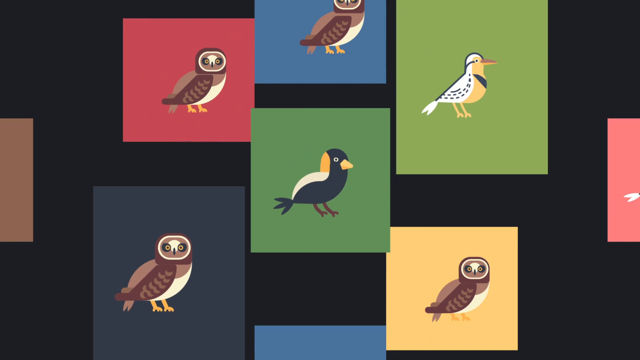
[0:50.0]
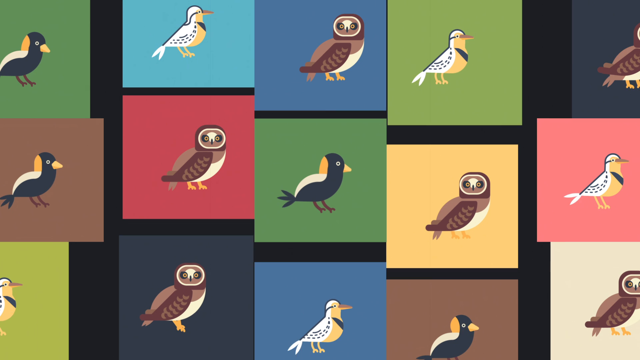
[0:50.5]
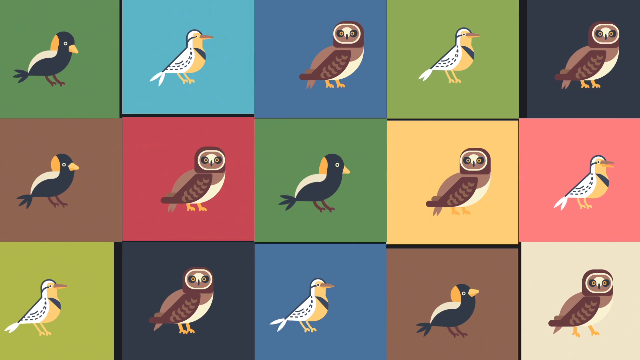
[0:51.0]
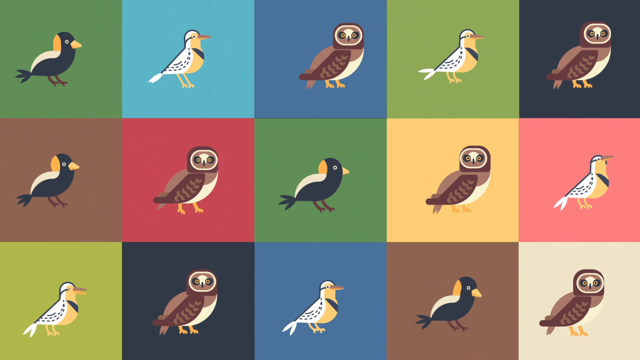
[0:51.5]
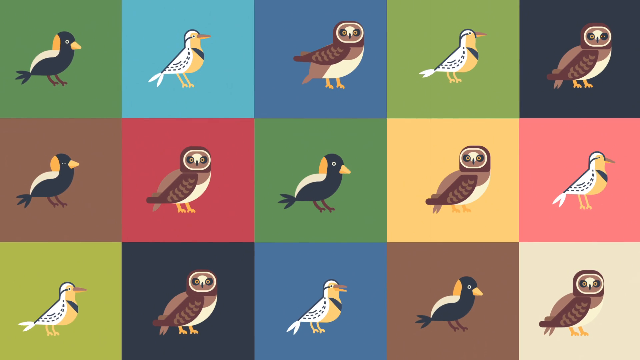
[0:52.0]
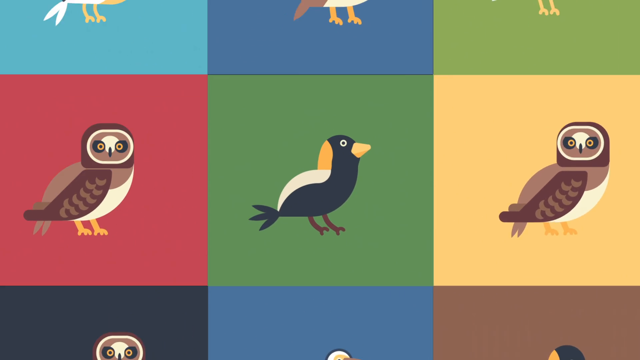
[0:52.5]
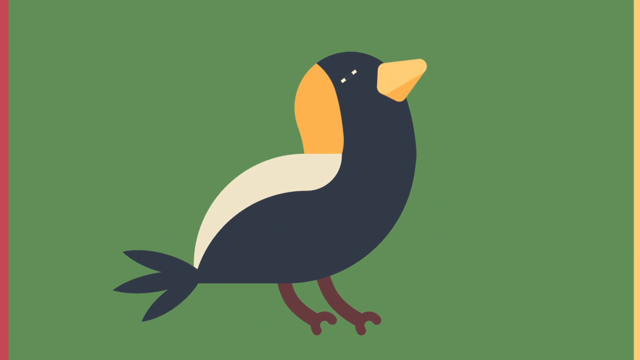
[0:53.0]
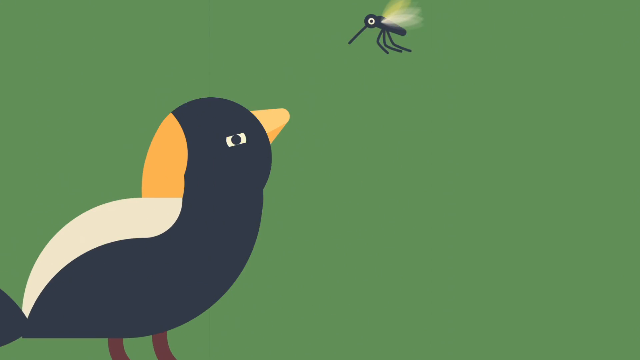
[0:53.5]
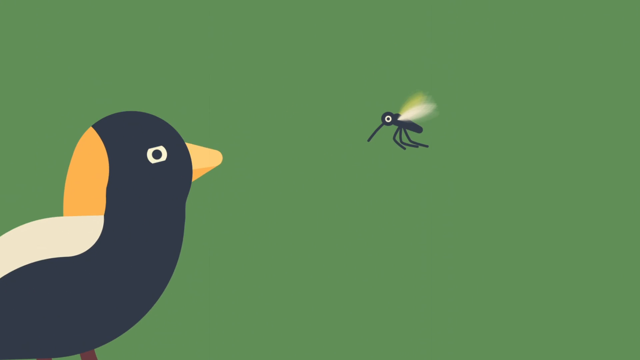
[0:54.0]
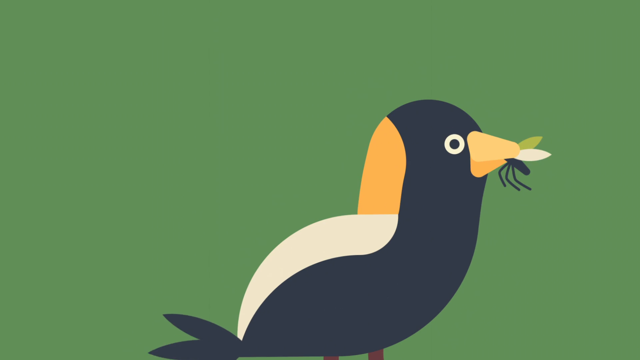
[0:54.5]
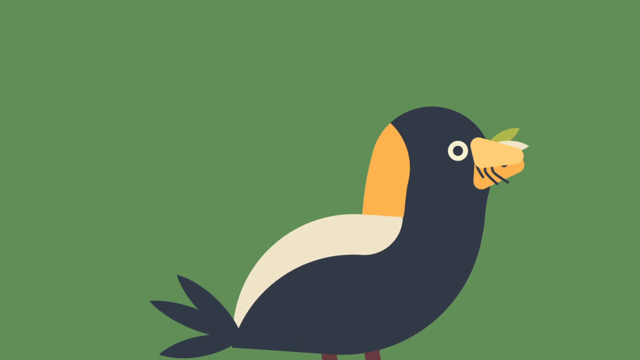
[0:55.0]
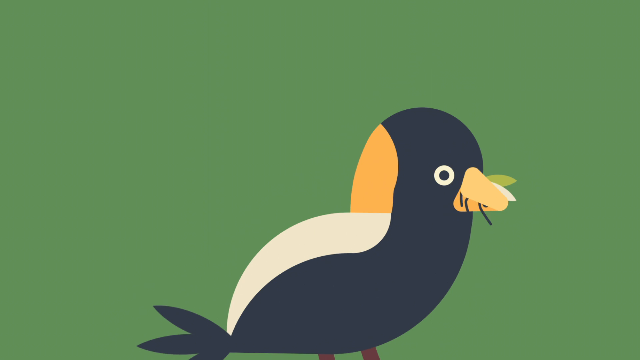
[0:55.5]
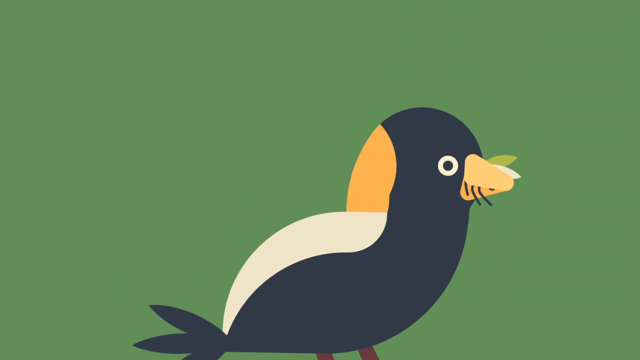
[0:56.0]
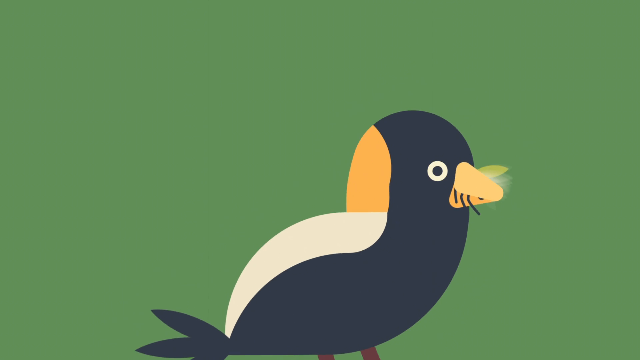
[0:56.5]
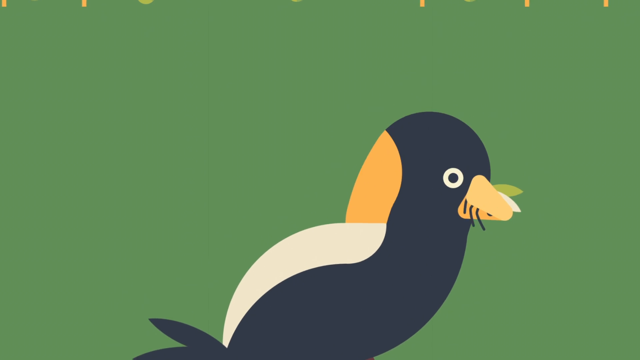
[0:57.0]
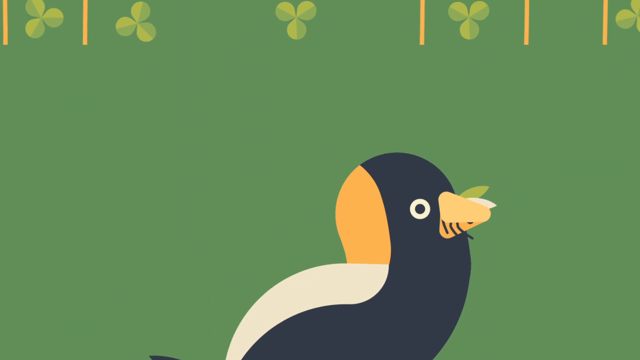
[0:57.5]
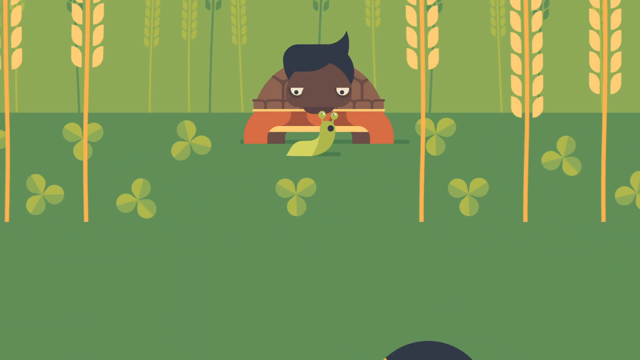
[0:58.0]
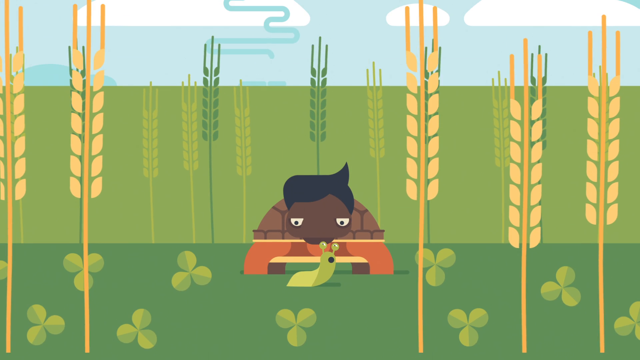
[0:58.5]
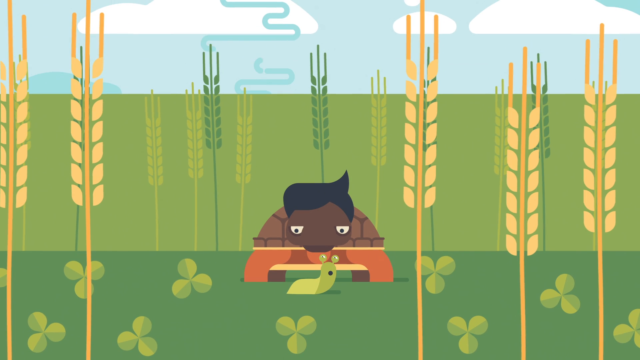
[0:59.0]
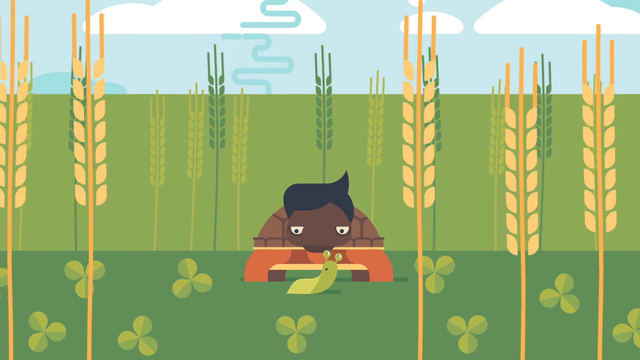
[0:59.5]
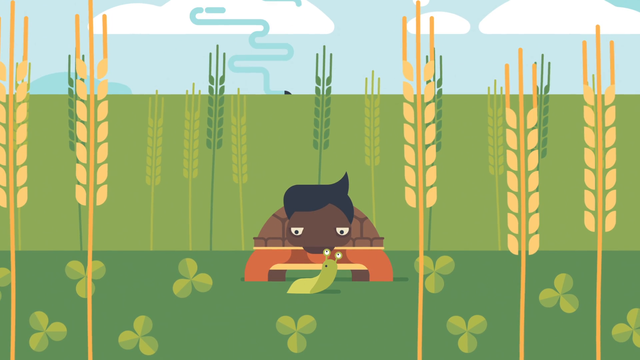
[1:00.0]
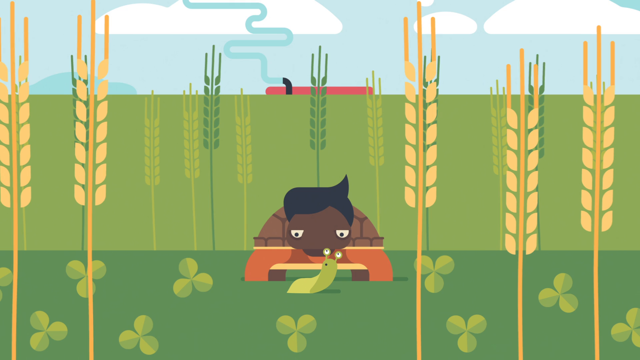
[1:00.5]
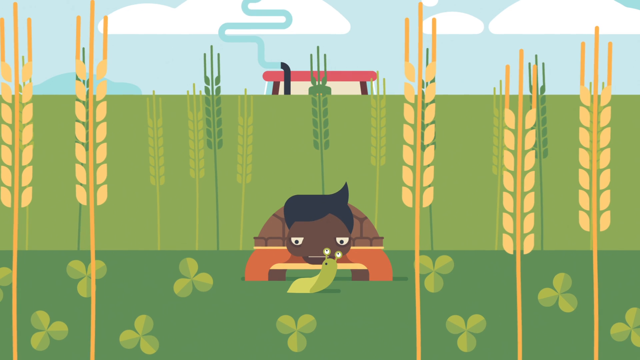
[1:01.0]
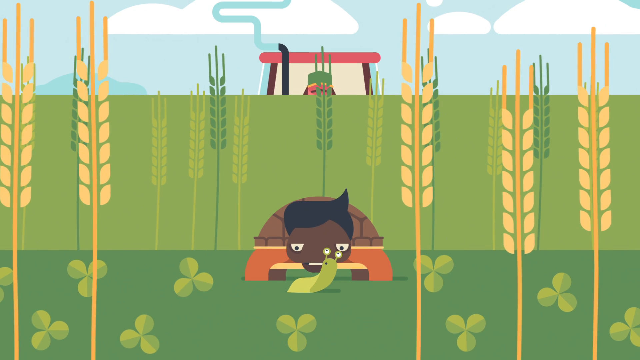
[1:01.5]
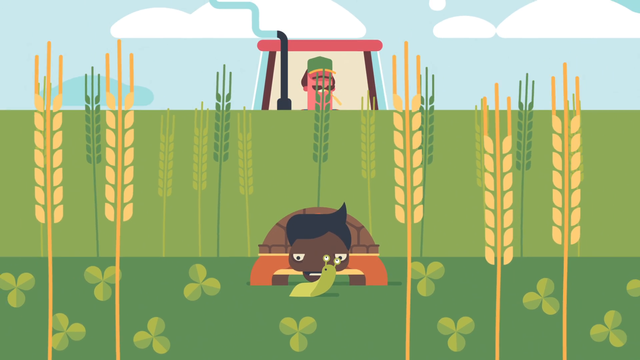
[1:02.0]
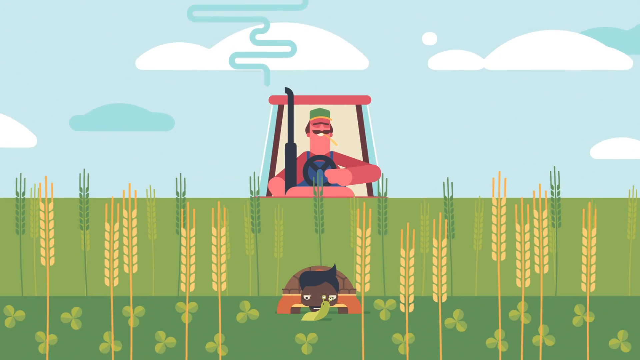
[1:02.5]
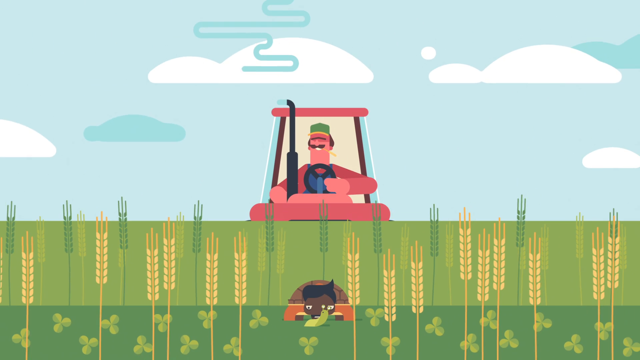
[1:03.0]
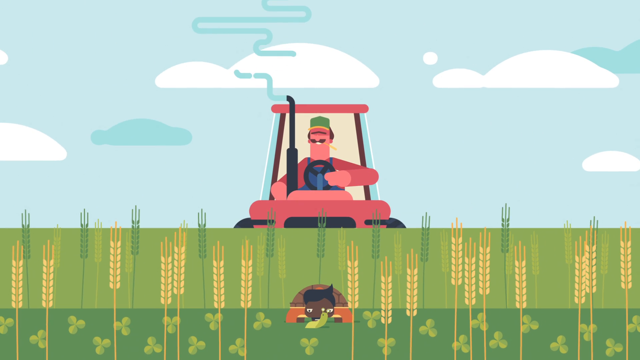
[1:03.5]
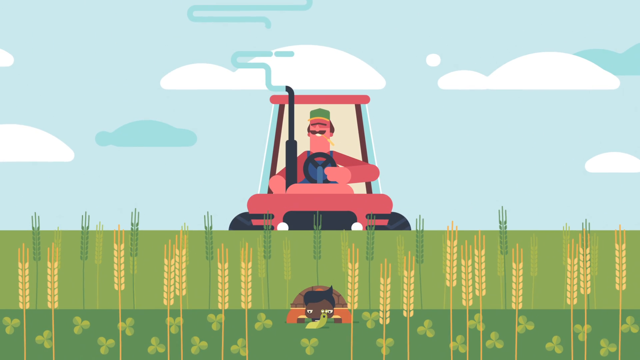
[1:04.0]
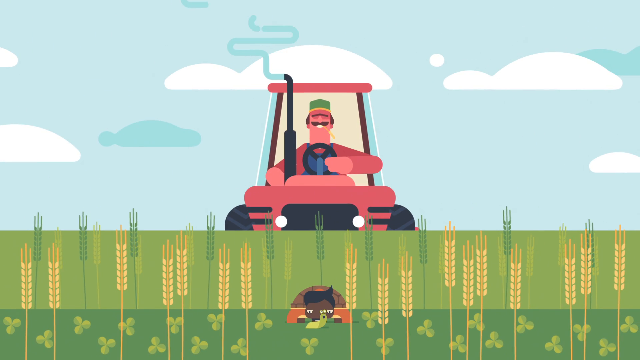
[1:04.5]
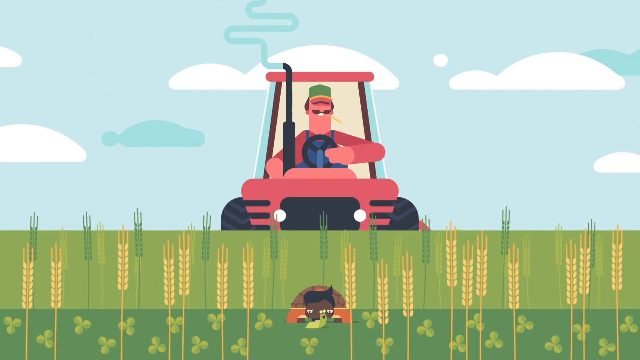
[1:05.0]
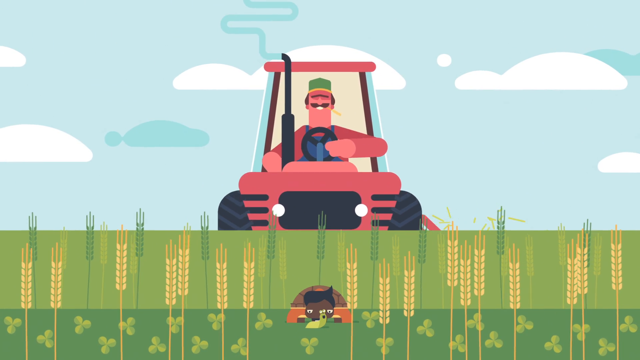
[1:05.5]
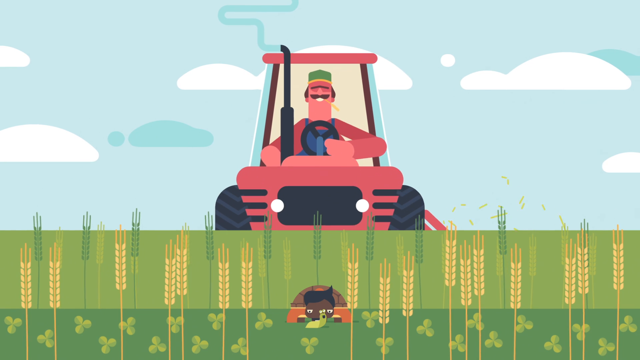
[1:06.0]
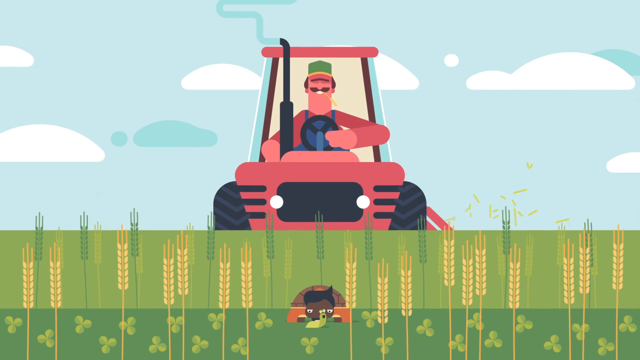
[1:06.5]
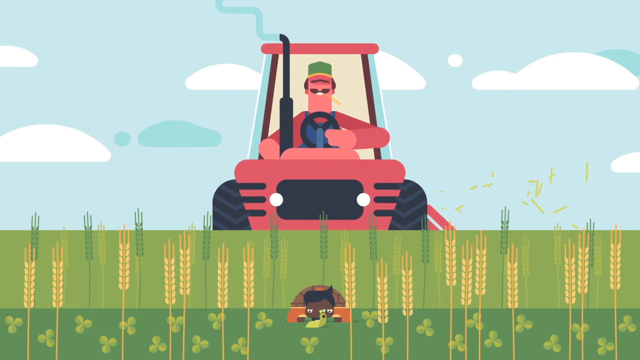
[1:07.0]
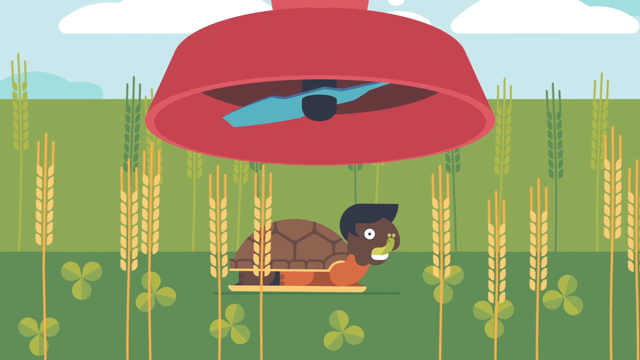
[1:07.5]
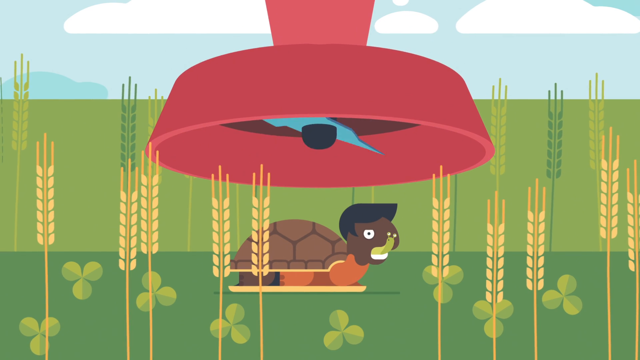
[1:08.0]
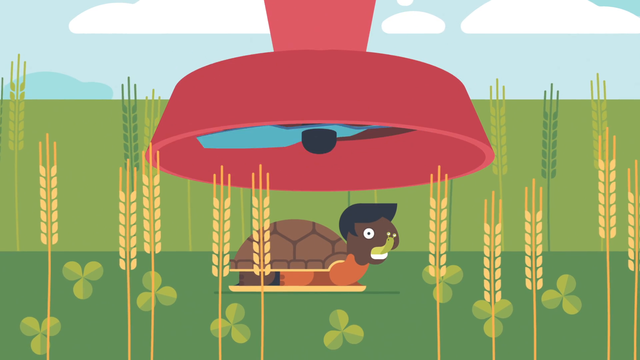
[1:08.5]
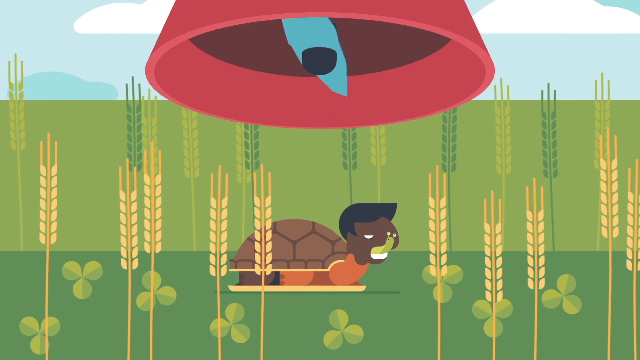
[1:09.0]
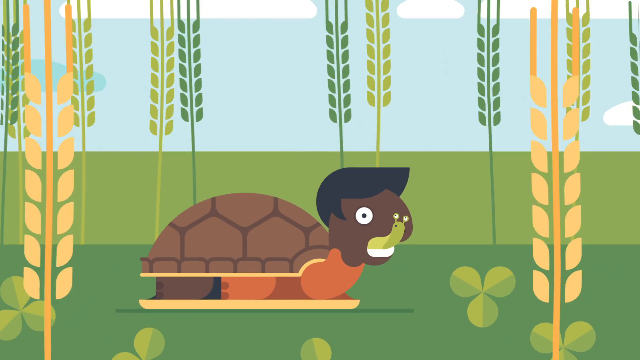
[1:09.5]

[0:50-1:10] A bird eats a mosquito against a green background. Next, a brown-orange turtle gets ready to eat what appears to be a snail. A farmer comes into view, getting ready to mow the path where the turtle and snail are. It is a tall wheat field with clover, and the farmer does not see them; he just smiles, going about his day as he mows, driving a red tractor. Some sort of device picks up or suctions up the turtle and snail, and by this point the turtle has the snail in its mouth. The device has some sort of blade that is blue and black, and it is also red, the same color as the tractor, though it is unclear whether it is the tractor. It comes down onto the snail and the turtle.